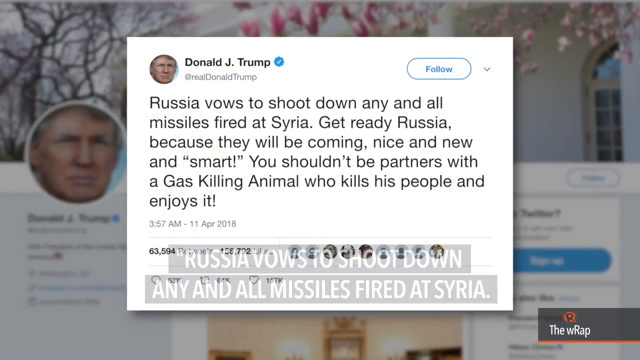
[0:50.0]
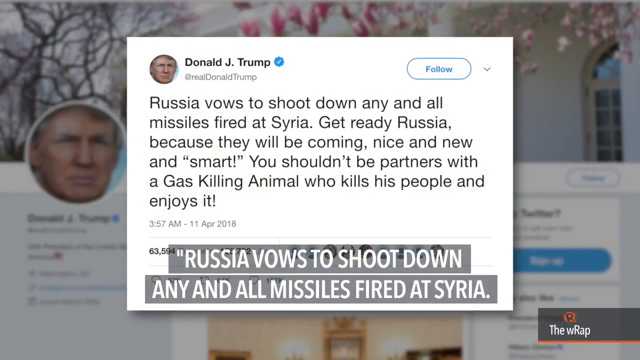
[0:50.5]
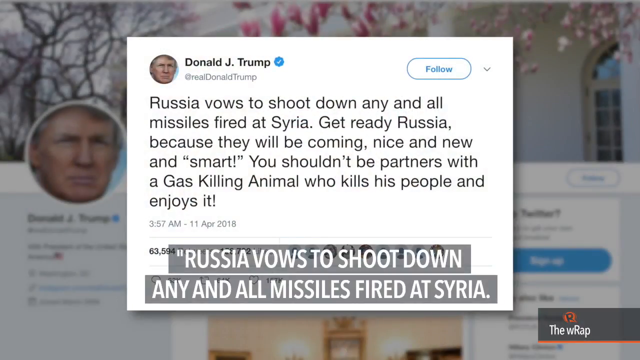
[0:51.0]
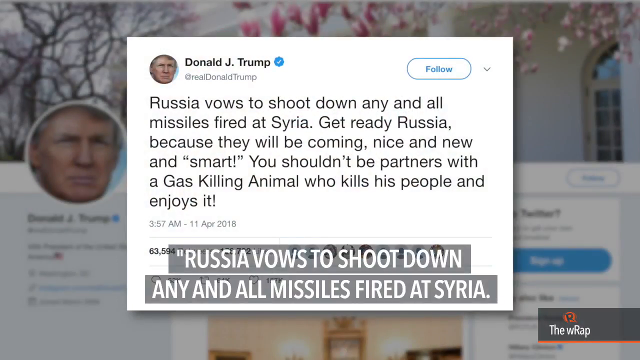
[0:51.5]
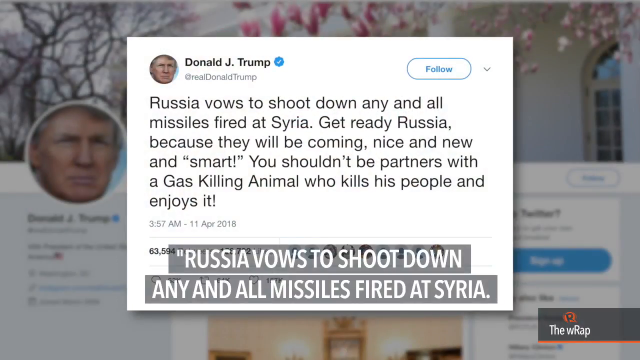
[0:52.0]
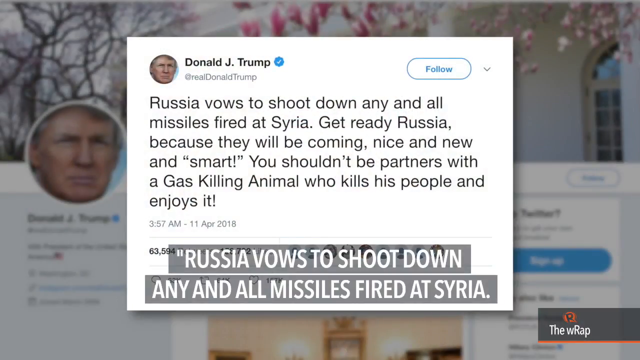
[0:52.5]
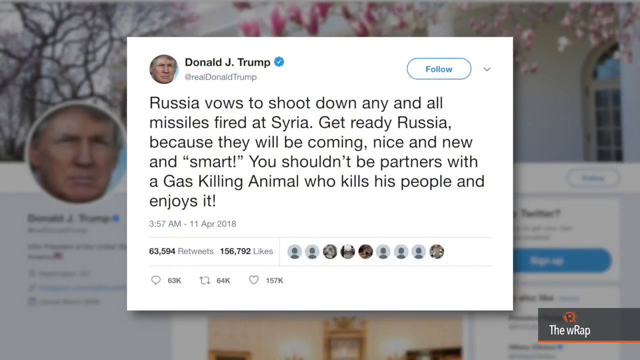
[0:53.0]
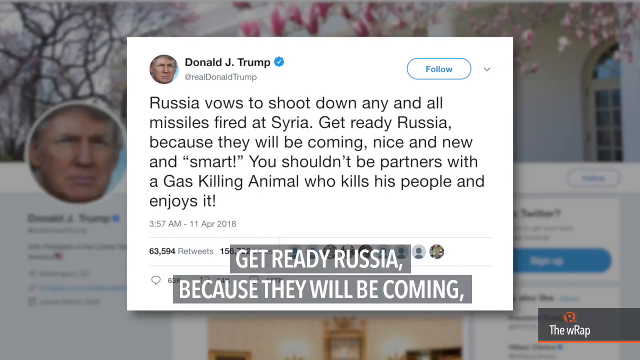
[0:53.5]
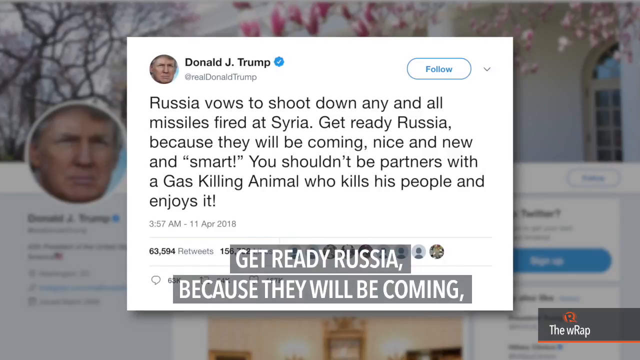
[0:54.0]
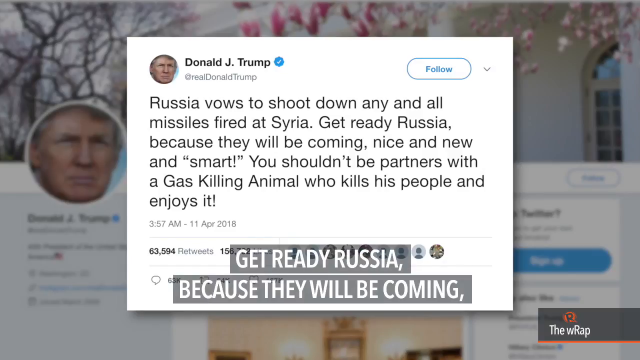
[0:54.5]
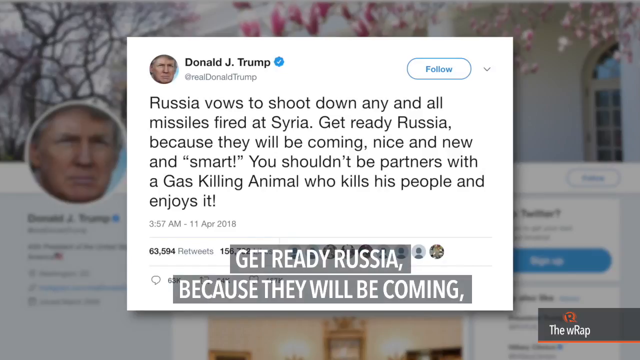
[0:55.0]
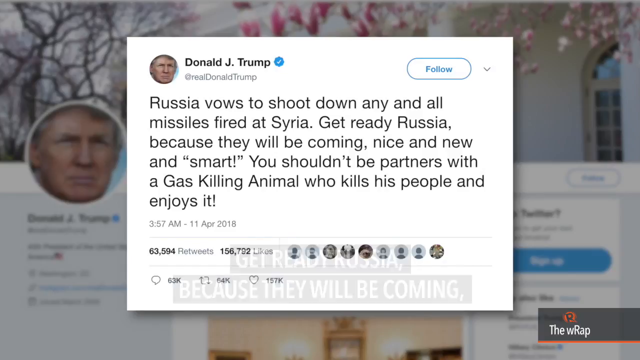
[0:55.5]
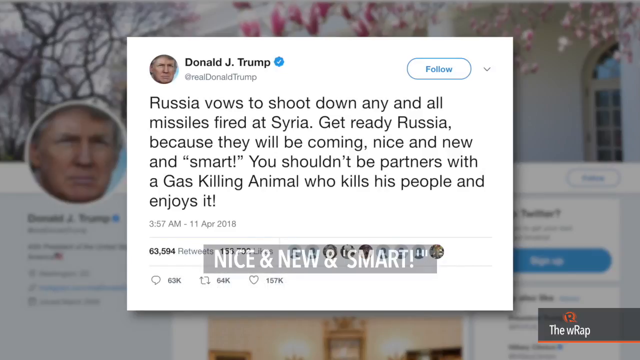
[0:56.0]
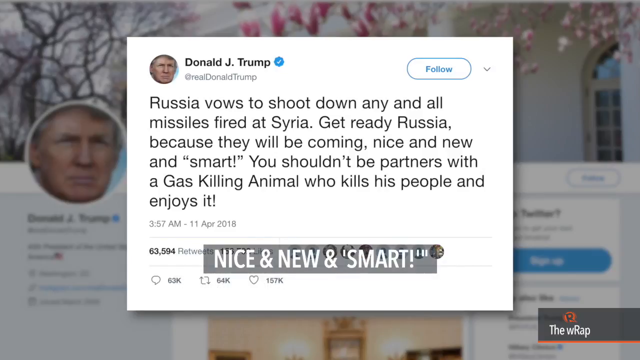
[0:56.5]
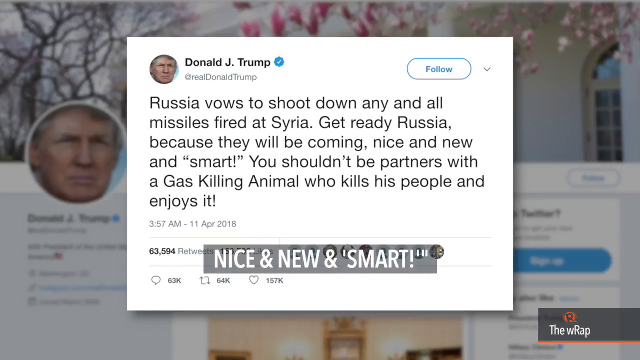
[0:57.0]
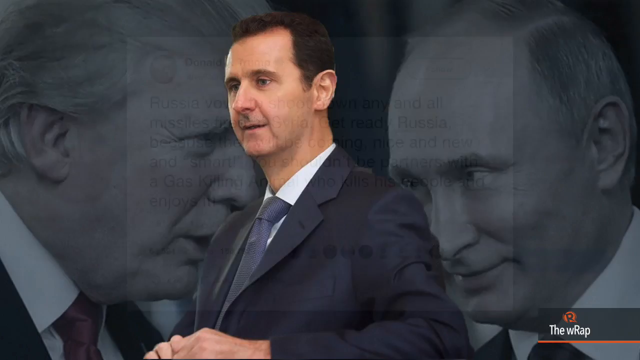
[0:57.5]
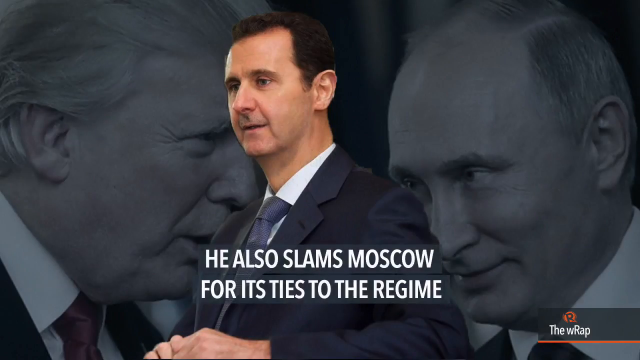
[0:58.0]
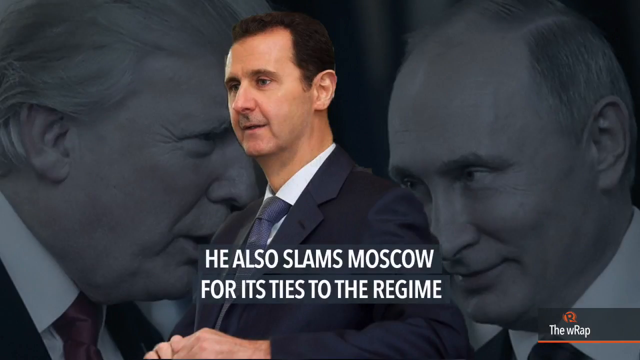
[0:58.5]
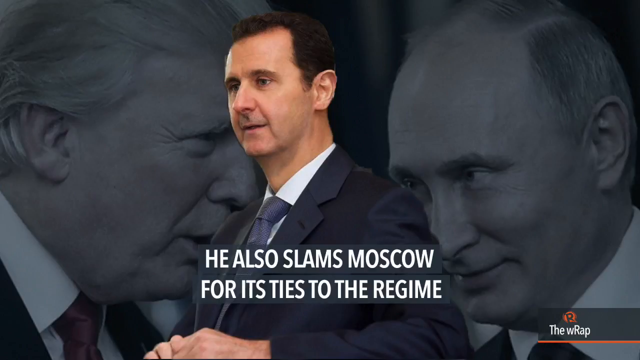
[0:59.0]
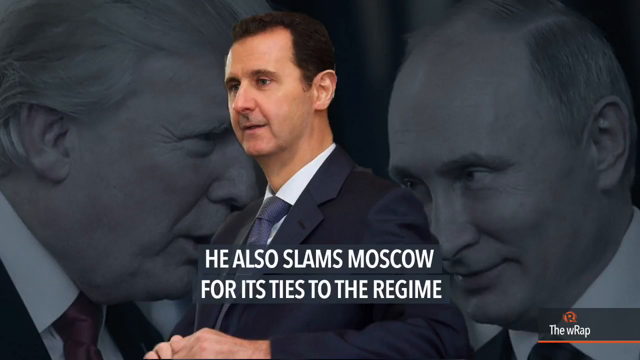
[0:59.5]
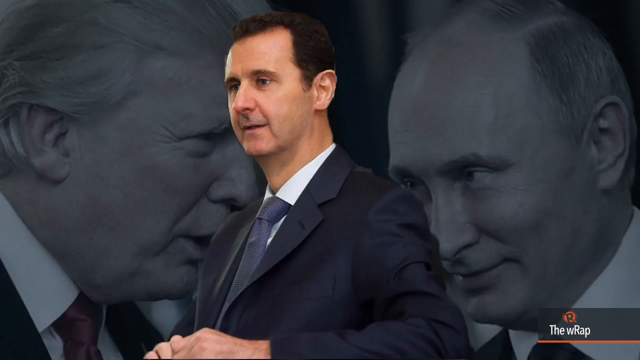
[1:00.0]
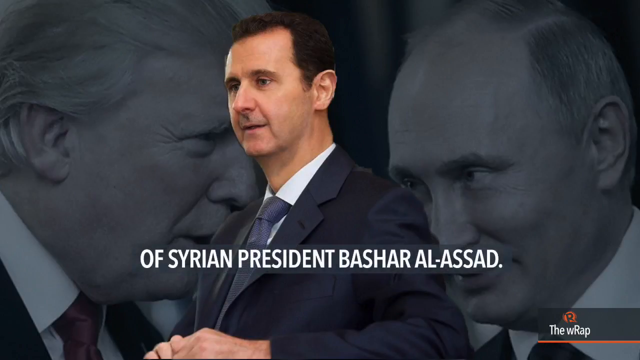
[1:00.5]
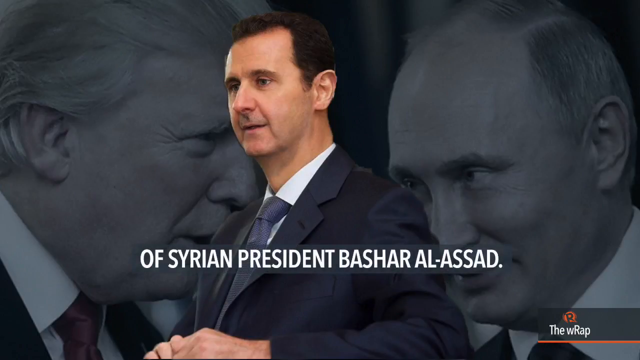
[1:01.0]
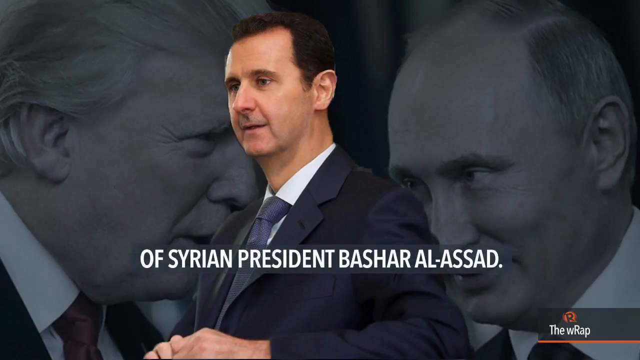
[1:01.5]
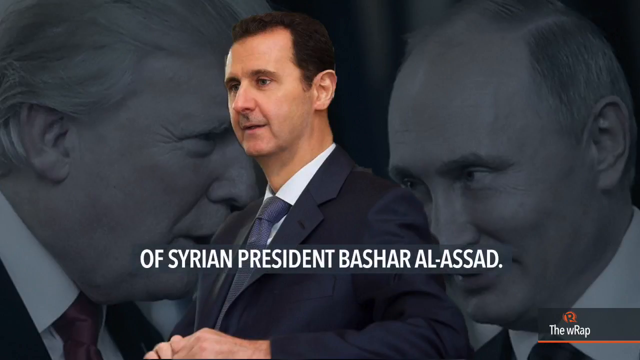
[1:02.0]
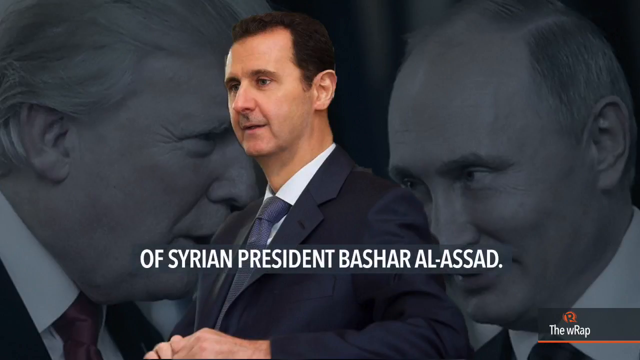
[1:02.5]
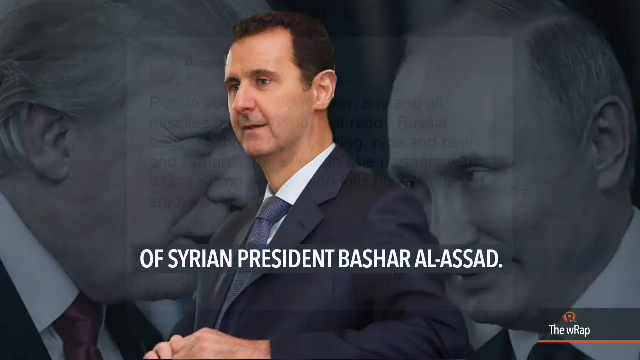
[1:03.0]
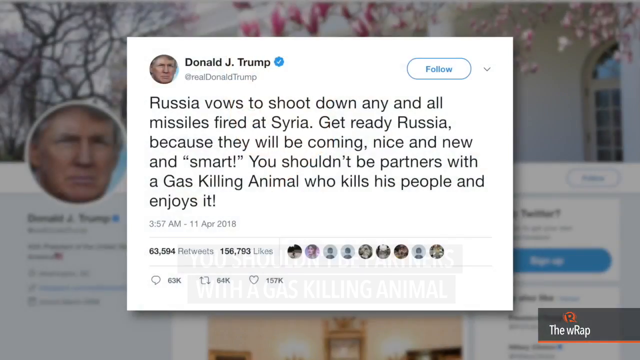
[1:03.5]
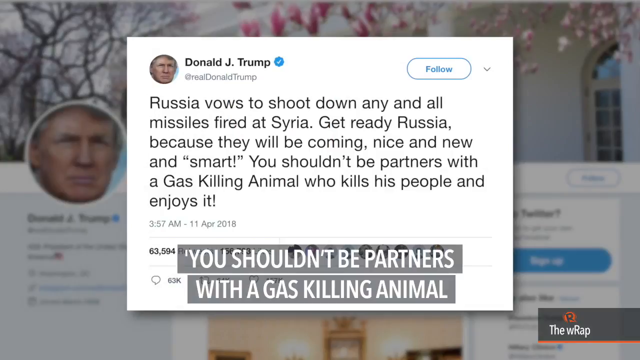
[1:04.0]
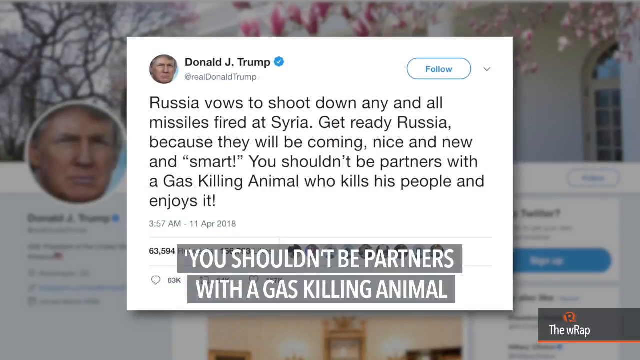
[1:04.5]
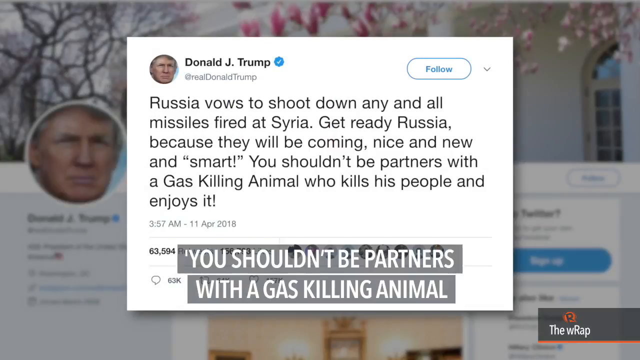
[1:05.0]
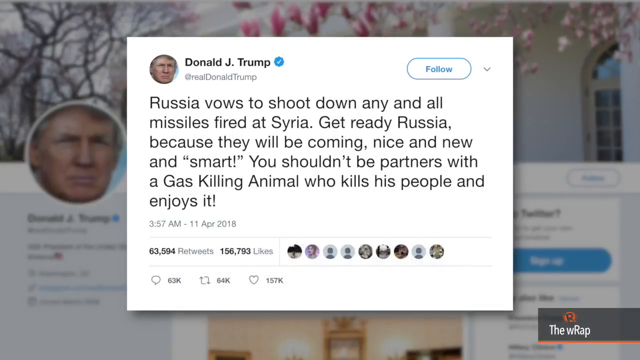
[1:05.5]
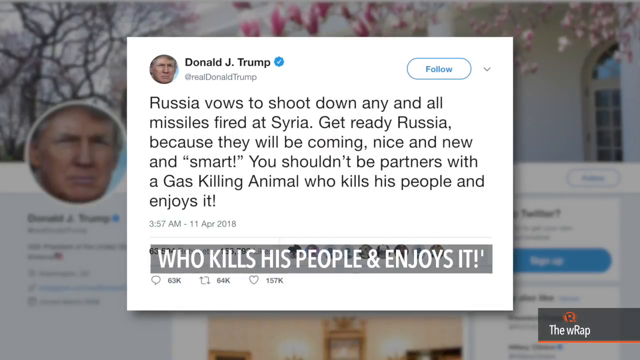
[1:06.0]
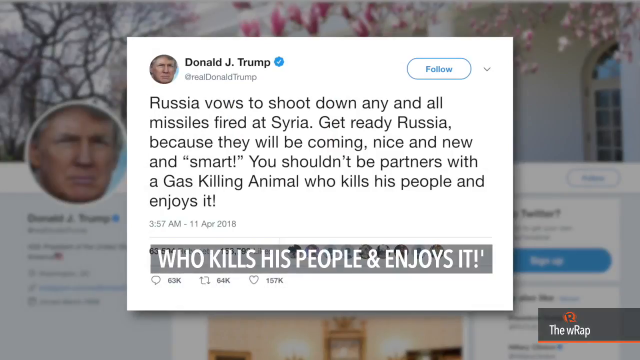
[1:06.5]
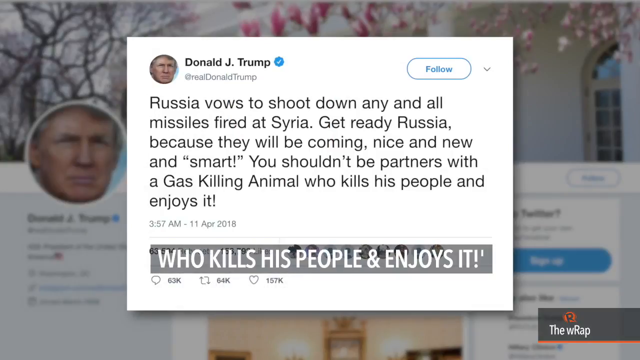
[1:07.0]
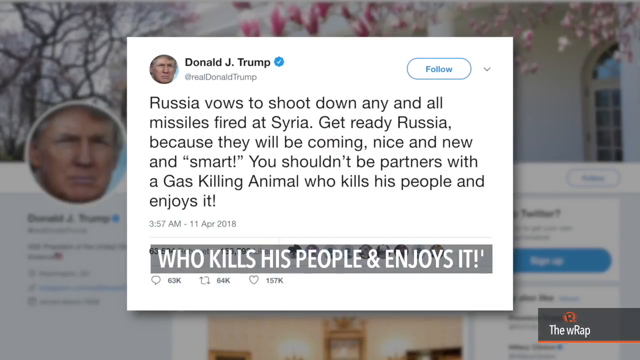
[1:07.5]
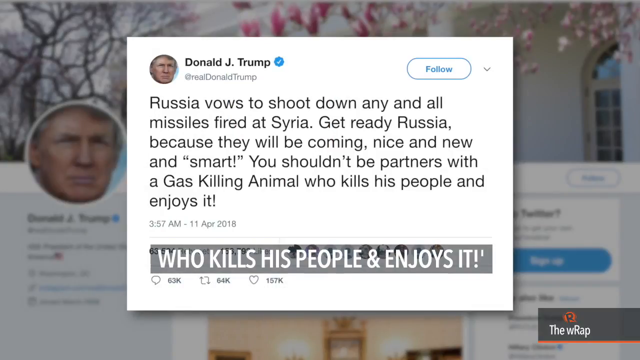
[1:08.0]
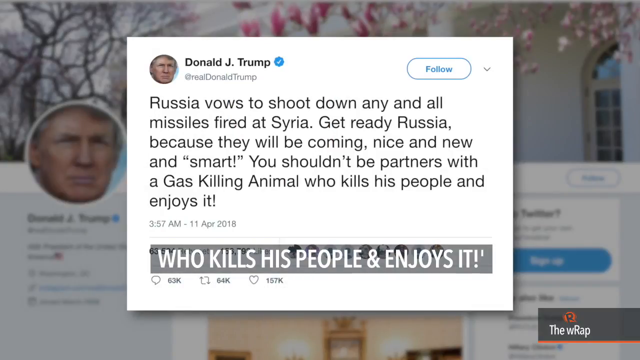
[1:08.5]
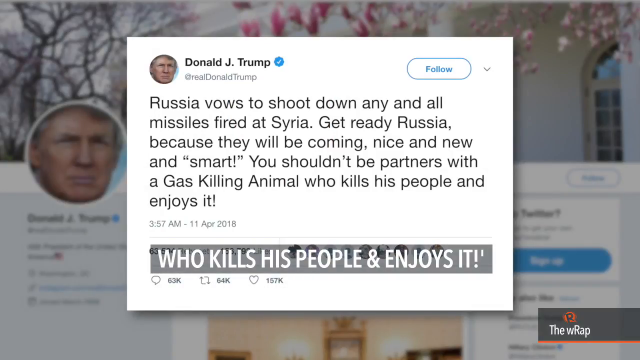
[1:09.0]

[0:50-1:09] Donald J Trump's Twitter feed shows a tweet that says "Russia vows to shoot down any and all missiles fired at Syria. Get ready Russia because they will be coming", with the word "smart" in quotation marks, and continues about partners with "a gas killing animal who kills his people and enjoys it". The text box at the bottom of the screen says "Russia vows to shoot down any and all missiles fired at Syria". The background picture stays the same while words from the tweet show at the bottom of the screen. The screen then changes to a color photo of President Assad in the center, with Putin to the right and Trump to the left; Putin and Trump are both almost completely black and white, with some pink on Trump's cheek. Putin has his head tilted down and is making an expression of some type of submission, possibly a false one, while Trump looks much more powerful. The screen refers to Syrian president Bashar al-Assad, and then the same tweet about Russia vowing to shoot down any and all missiles is shown.